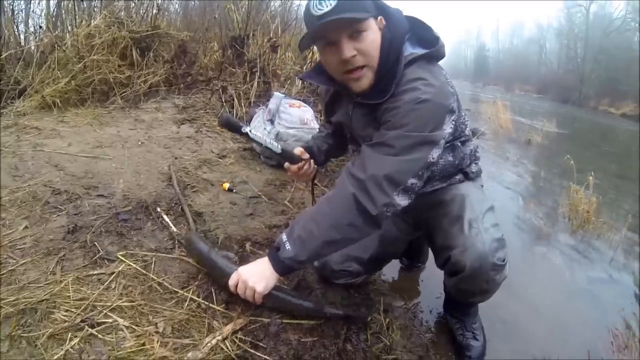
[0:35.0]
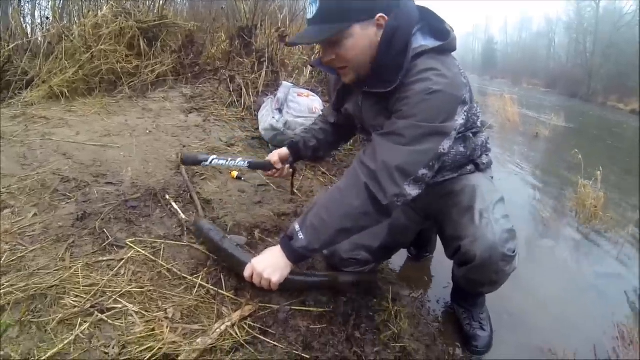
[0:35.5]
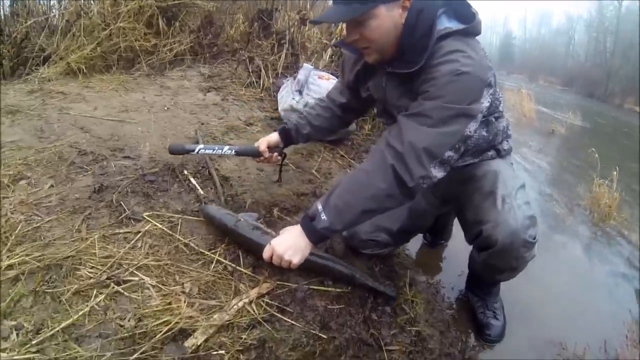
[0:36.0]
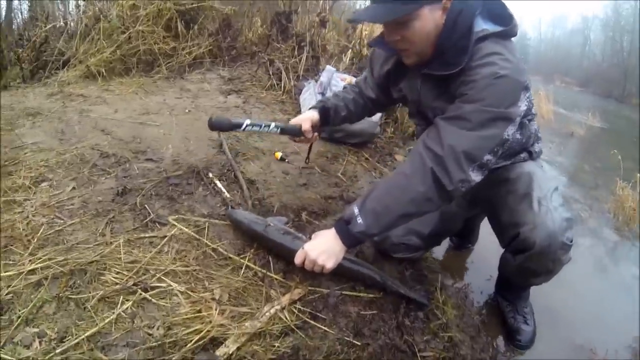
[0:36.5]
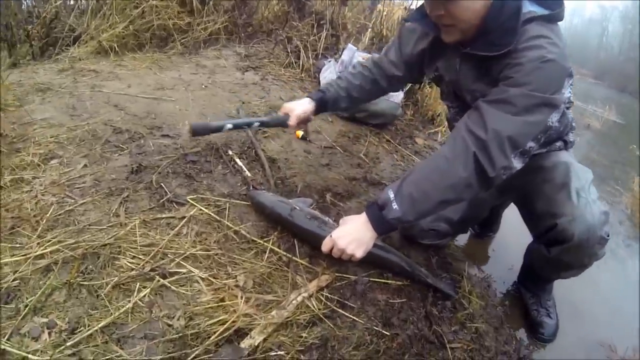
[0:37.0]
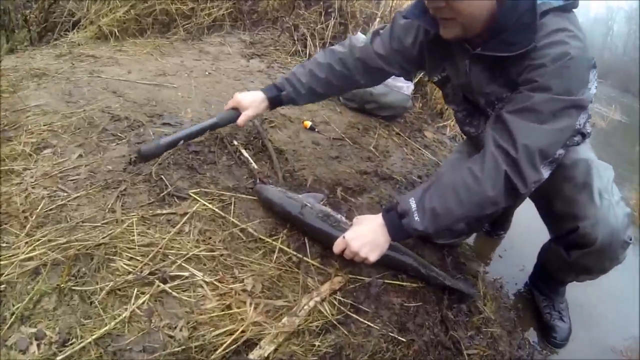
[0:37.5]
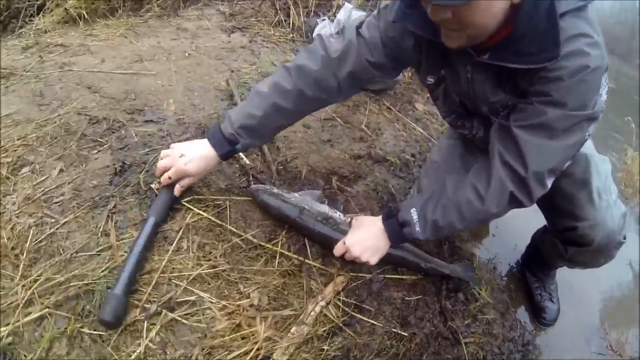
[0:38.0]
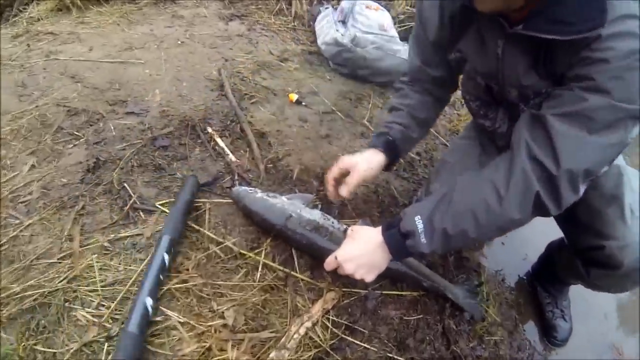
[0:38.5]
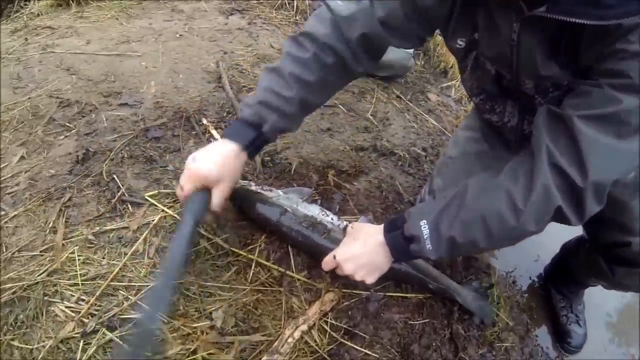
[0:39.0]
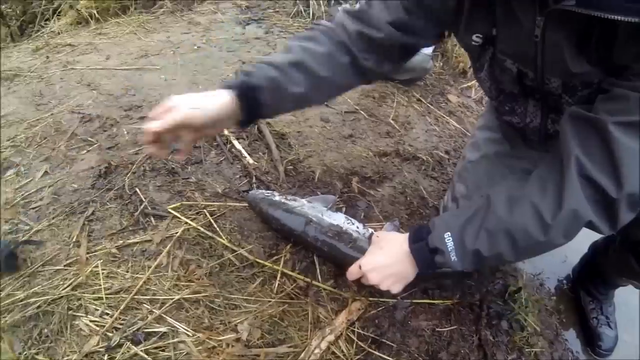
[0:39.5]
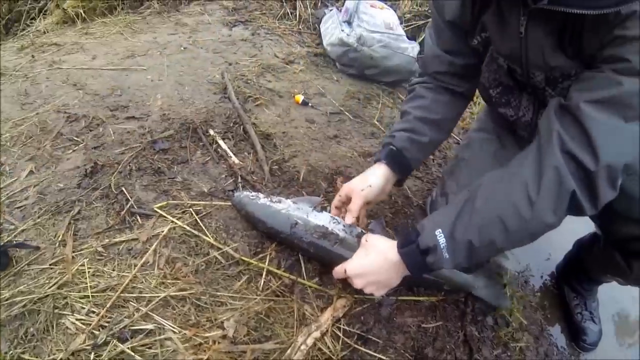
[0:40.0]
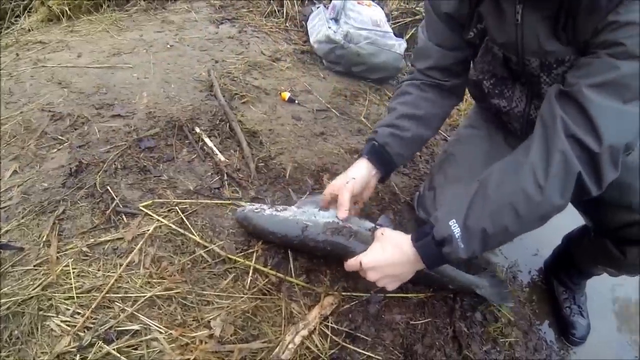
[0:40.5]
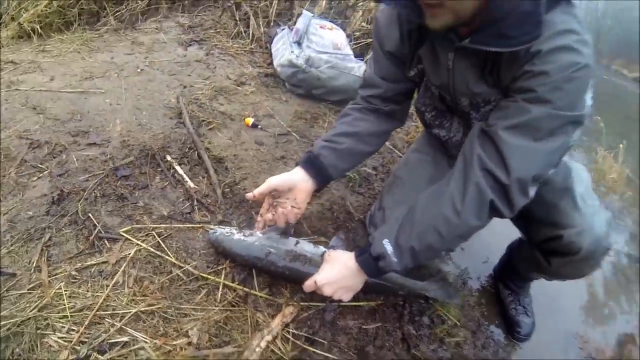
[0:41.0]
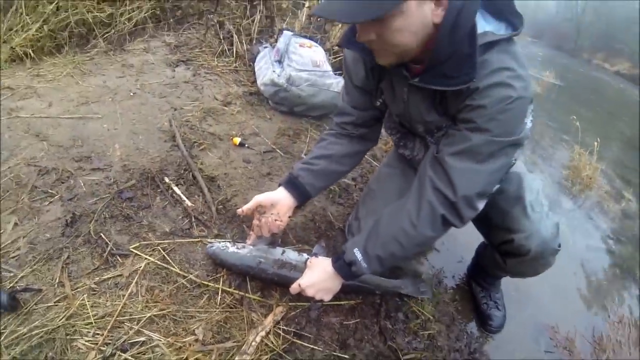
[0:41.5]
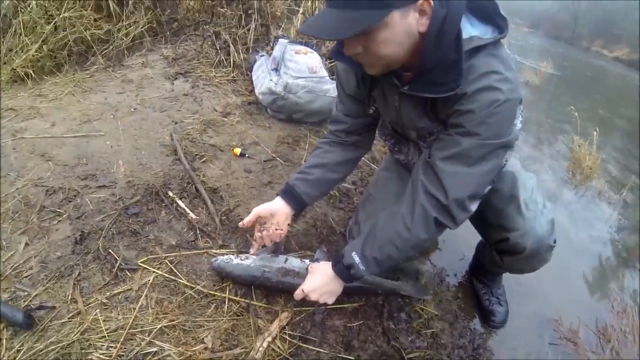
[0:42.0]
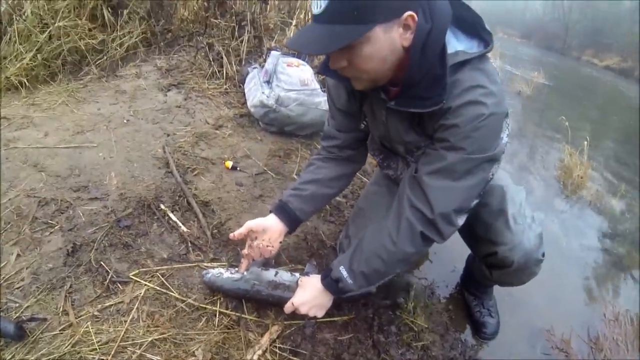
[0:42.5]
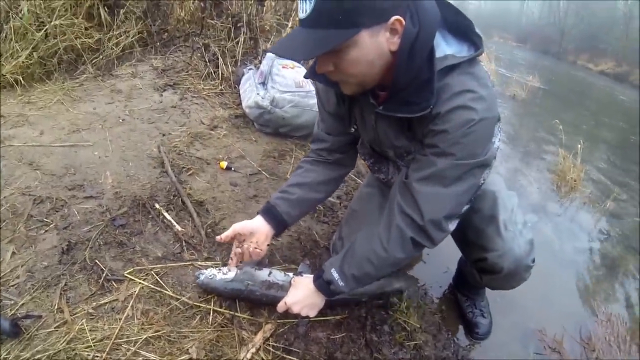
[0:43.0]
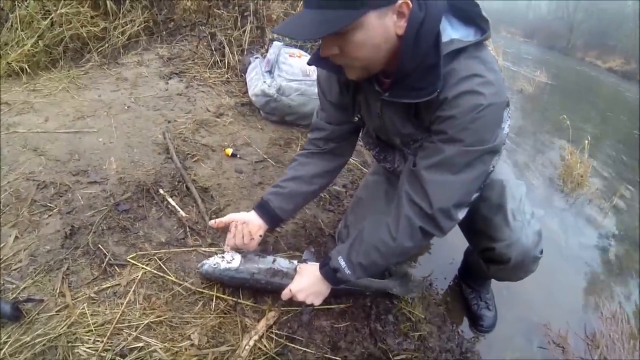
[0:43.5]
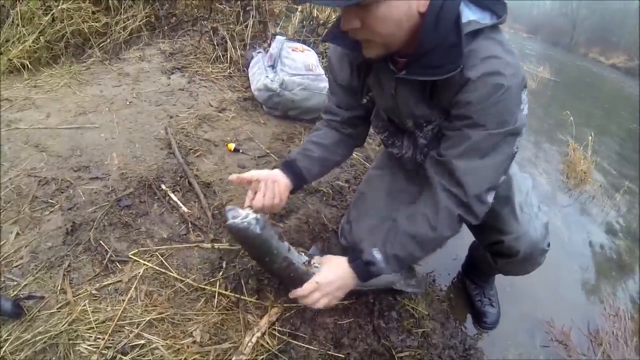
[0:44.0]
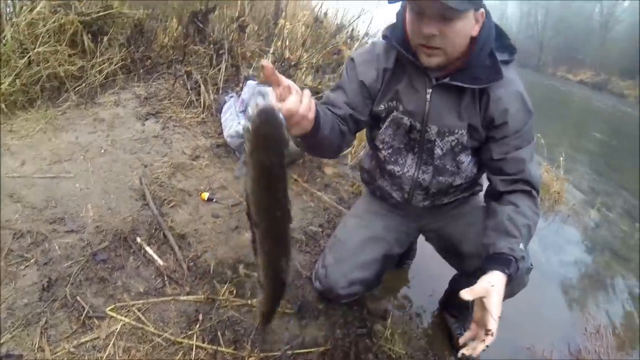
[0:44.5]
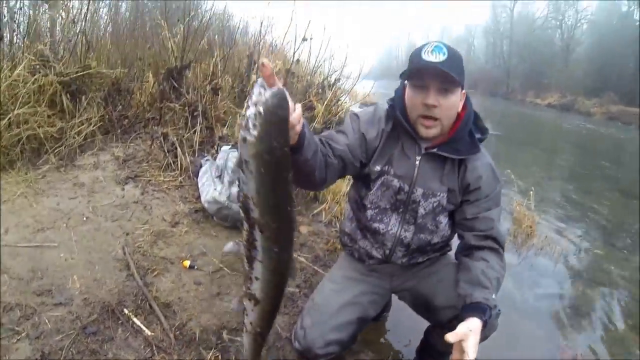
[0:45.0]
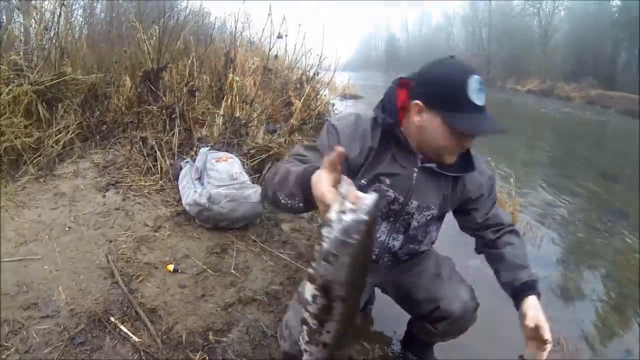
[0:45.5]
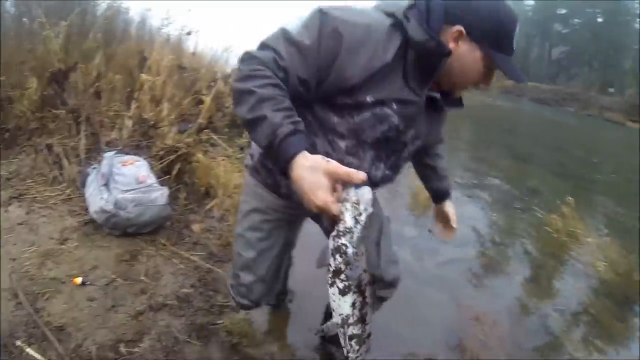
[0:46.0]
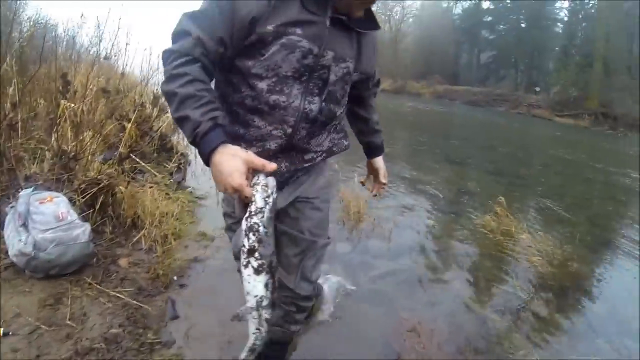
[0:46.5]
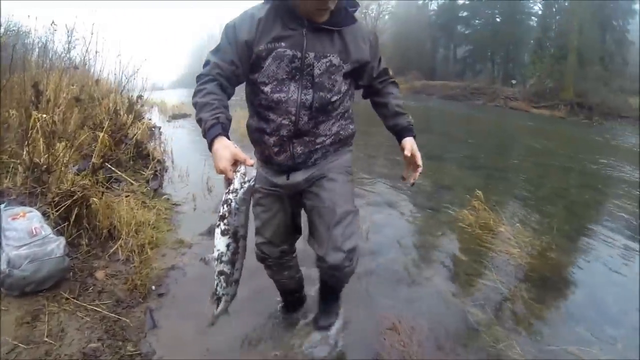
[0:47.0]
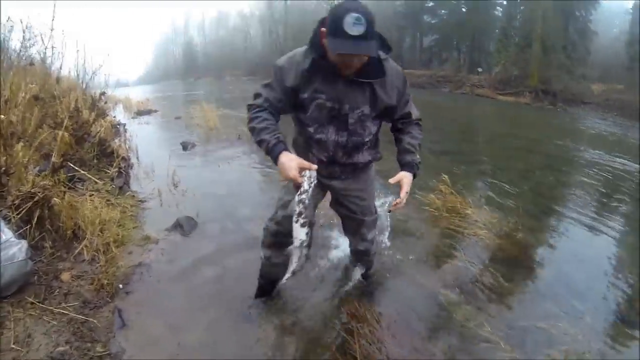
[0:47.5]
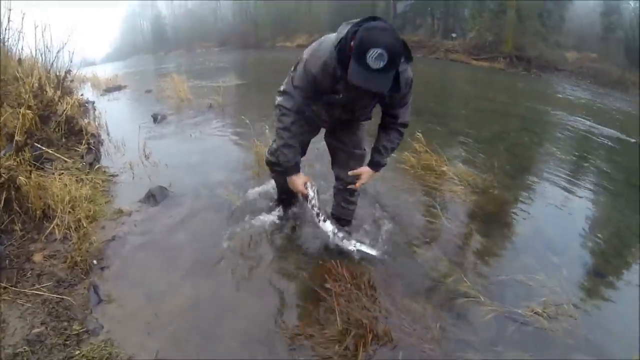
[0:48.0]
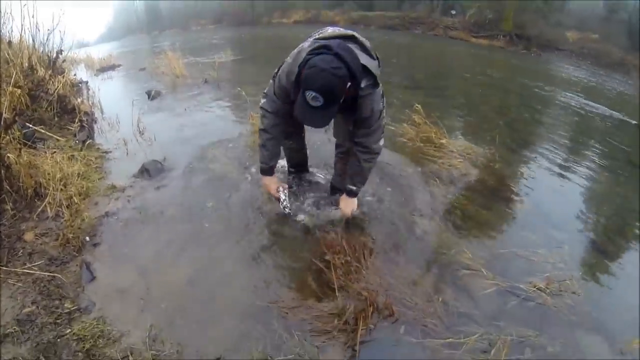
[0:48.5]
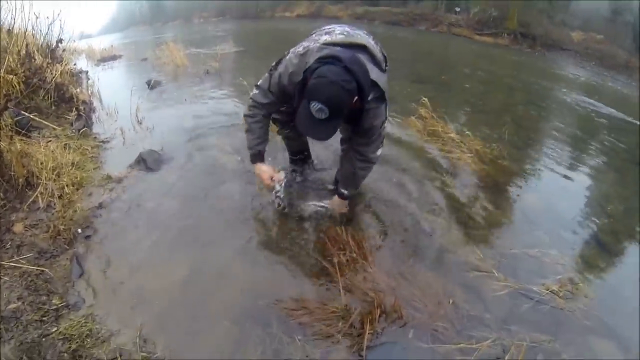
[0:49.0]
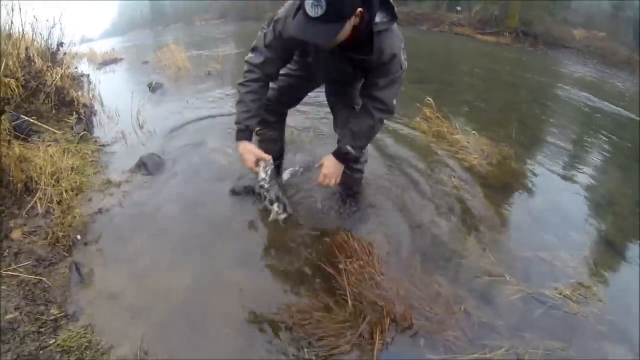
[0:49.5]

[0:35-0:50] Having just hit the fish with the baton, the man kneels with his left leg in the river and his right knee on the ground. He attempts to put the fish on the ground, but it rolls toward the river, so he picks it up and tosses it a little. The fish's tail still moves back and forth, though much subdued. He sticks a finger in the fish's mouth like a hook, picks it up and shows the camera that it is apparently not fighting anymore. Then, standing, he puts the fish in the river with two fingers of his right hand still in its mouth and his left hand holding it underwater, washing it off. The fish no longer appears silver as it did in the beginning; it is dark gray on the back with black and silver on its stomach and fins. It is an estimated 18 inches long, and its species is not identified.